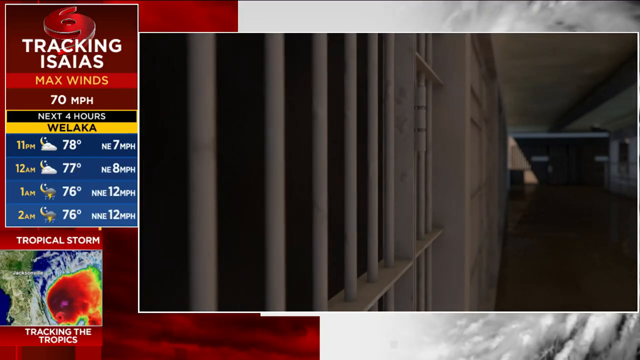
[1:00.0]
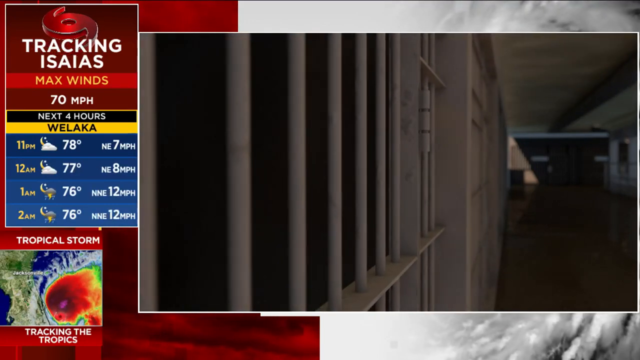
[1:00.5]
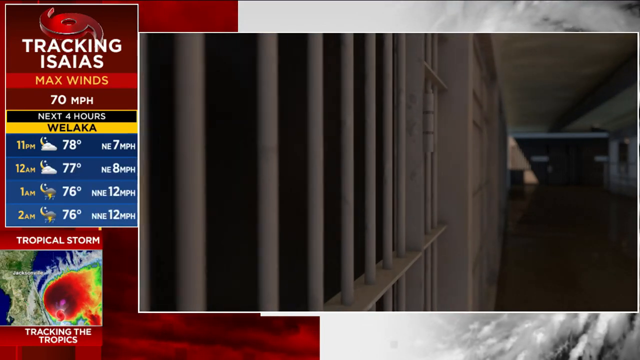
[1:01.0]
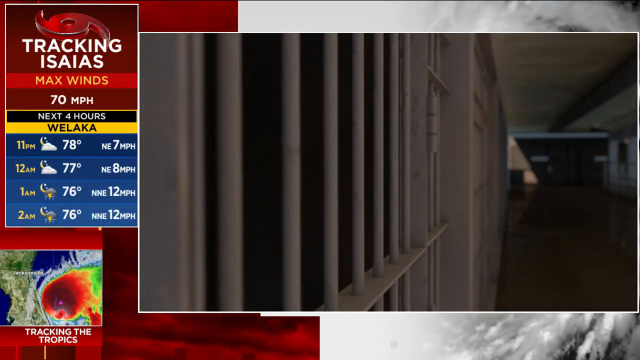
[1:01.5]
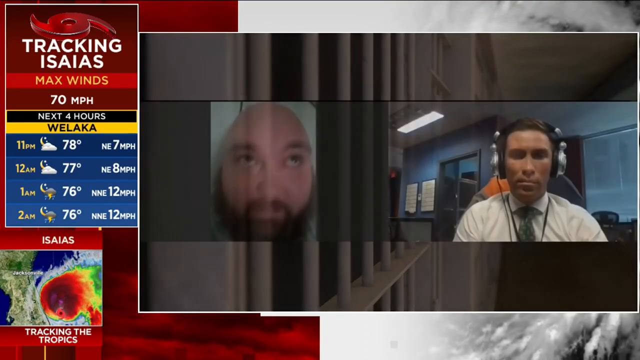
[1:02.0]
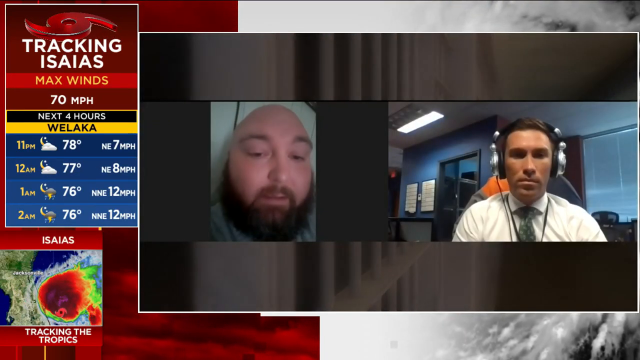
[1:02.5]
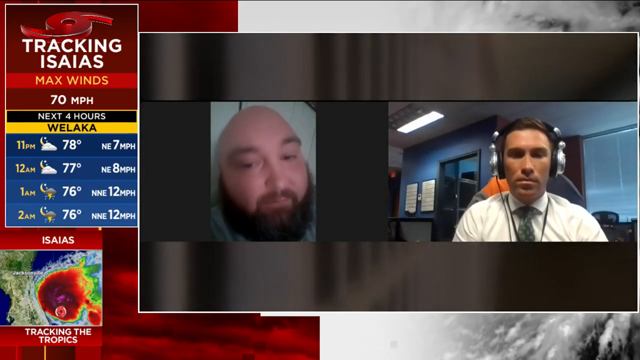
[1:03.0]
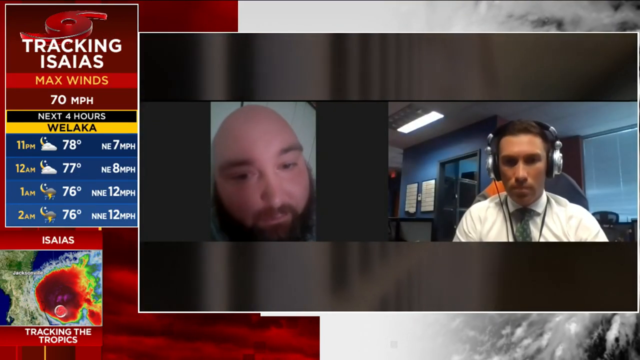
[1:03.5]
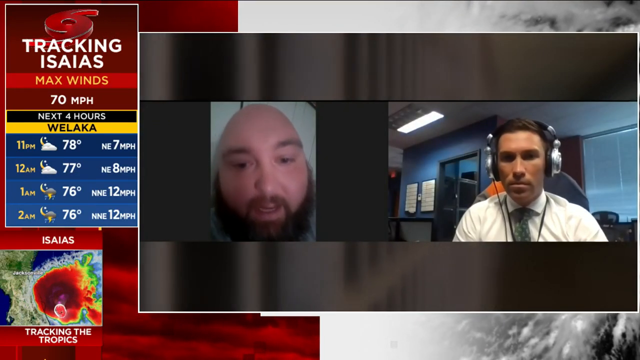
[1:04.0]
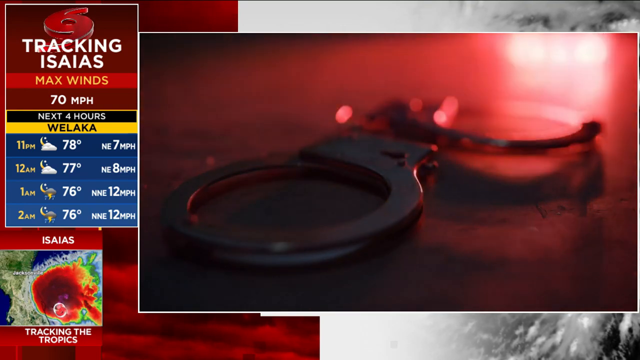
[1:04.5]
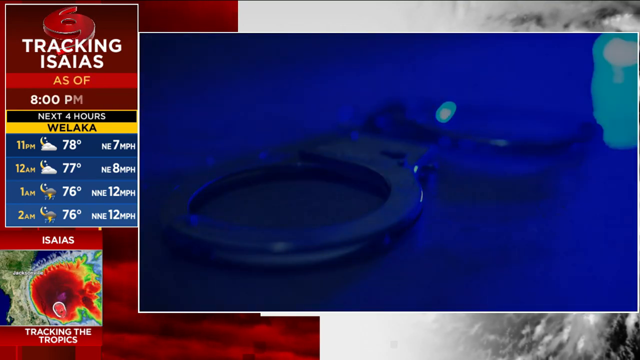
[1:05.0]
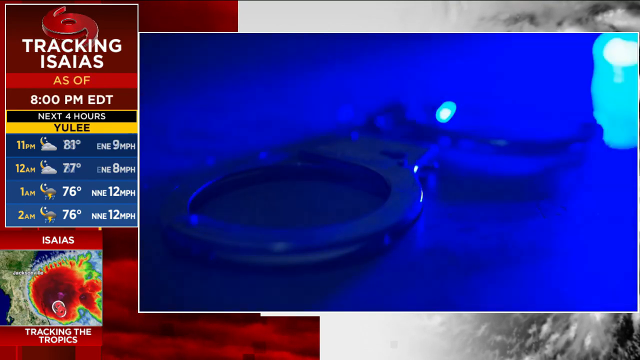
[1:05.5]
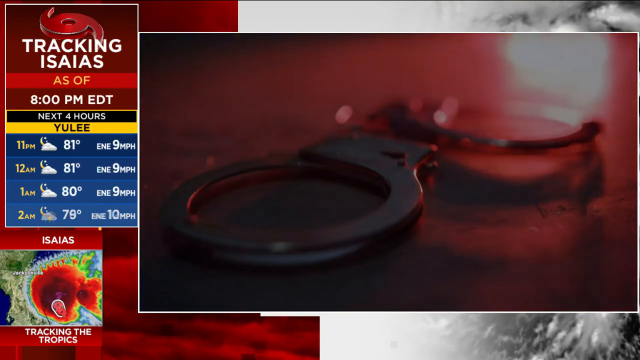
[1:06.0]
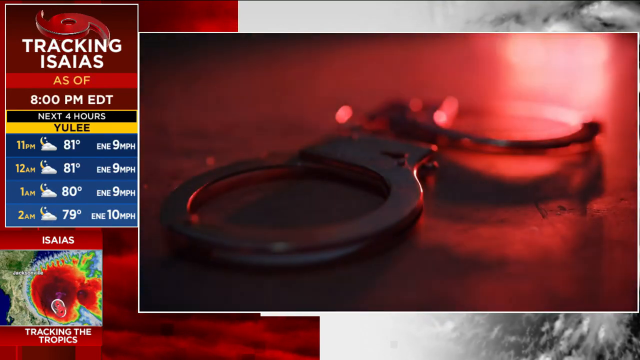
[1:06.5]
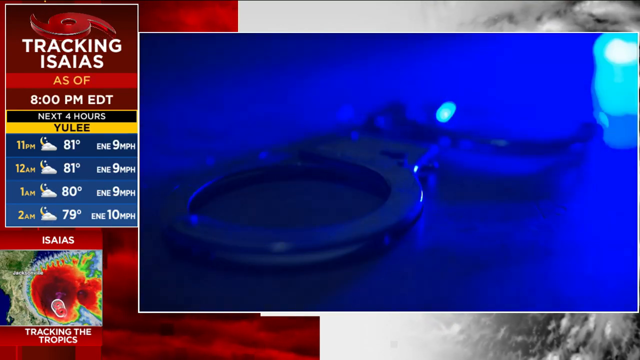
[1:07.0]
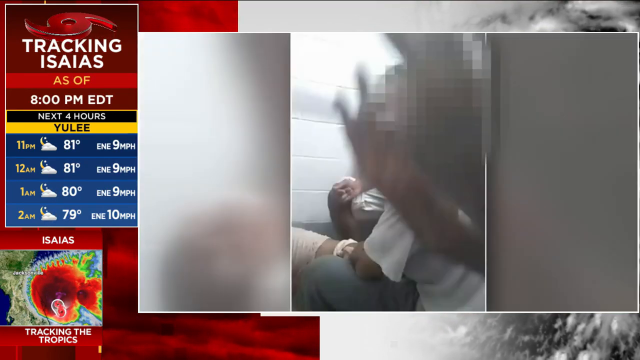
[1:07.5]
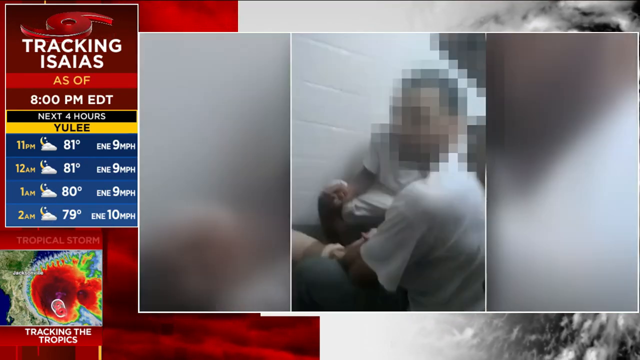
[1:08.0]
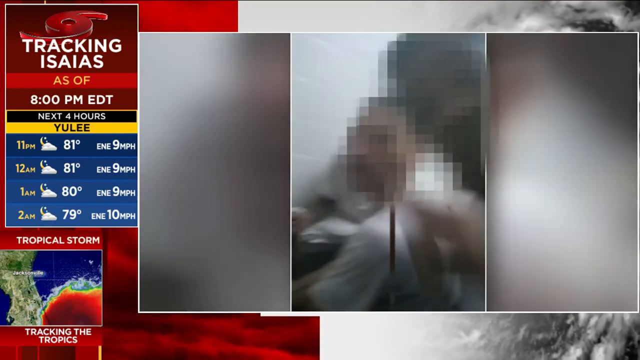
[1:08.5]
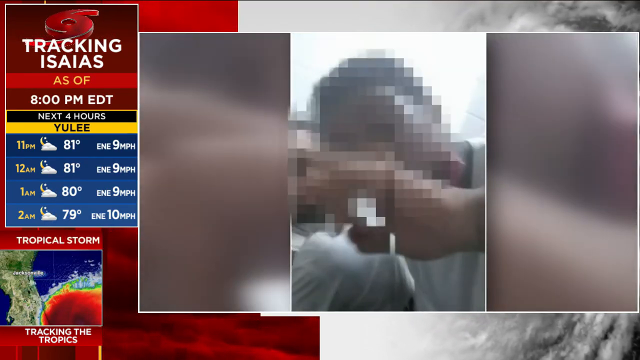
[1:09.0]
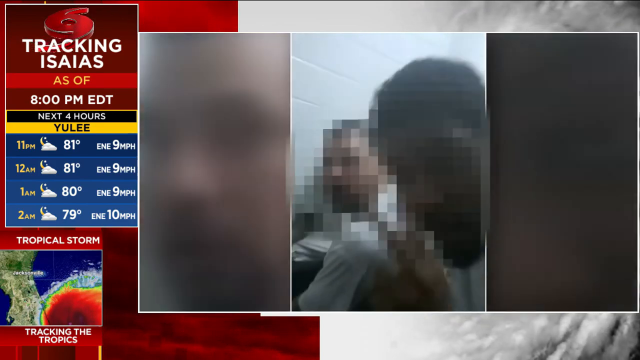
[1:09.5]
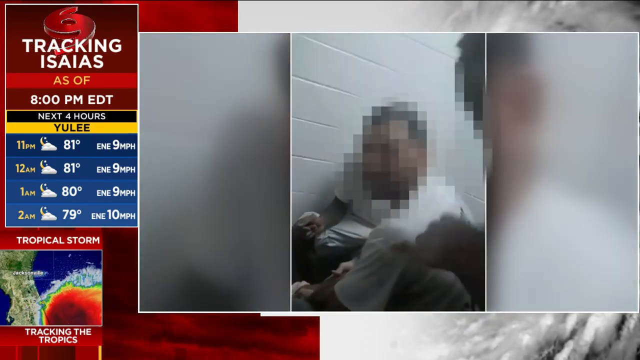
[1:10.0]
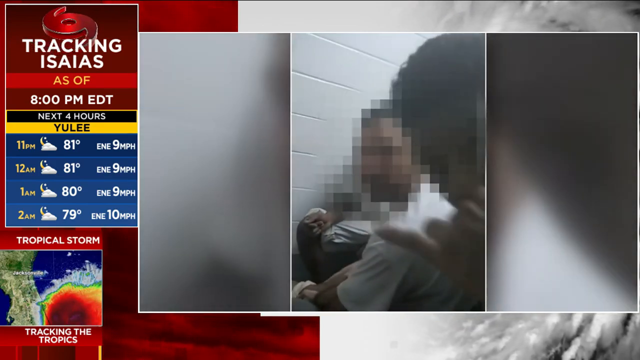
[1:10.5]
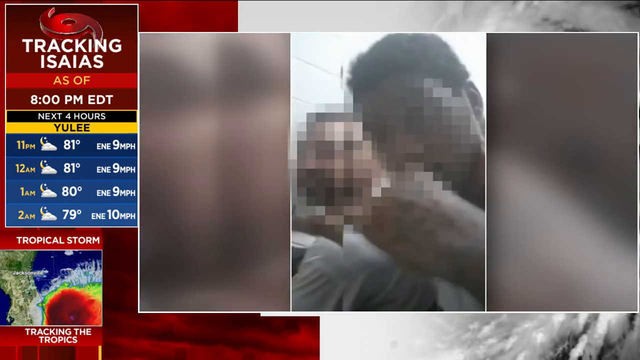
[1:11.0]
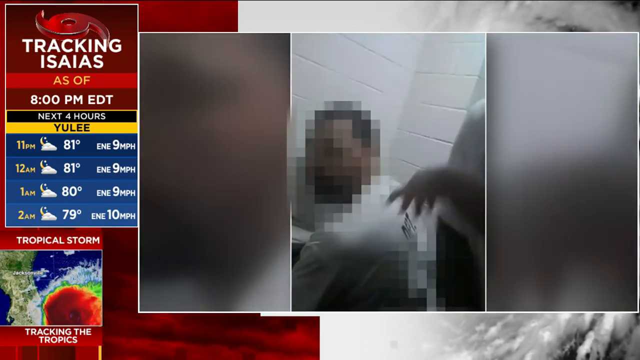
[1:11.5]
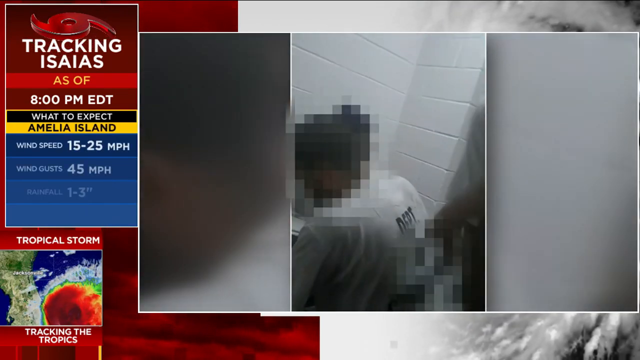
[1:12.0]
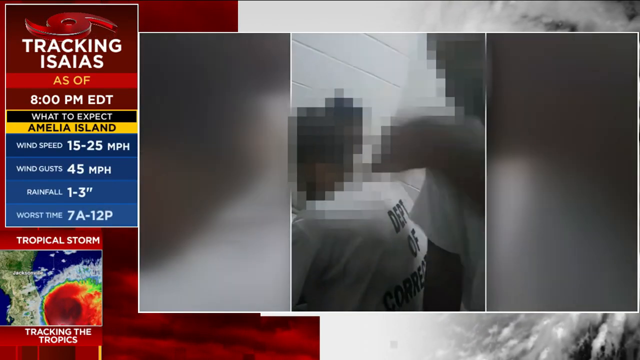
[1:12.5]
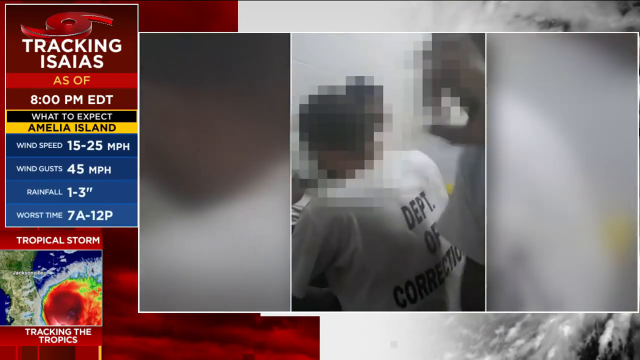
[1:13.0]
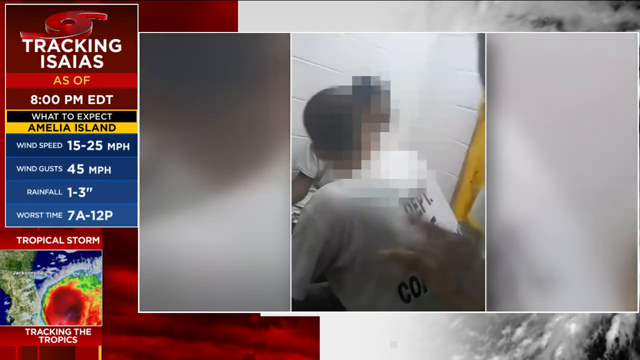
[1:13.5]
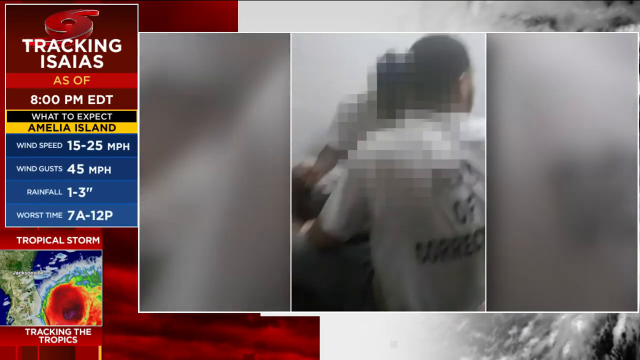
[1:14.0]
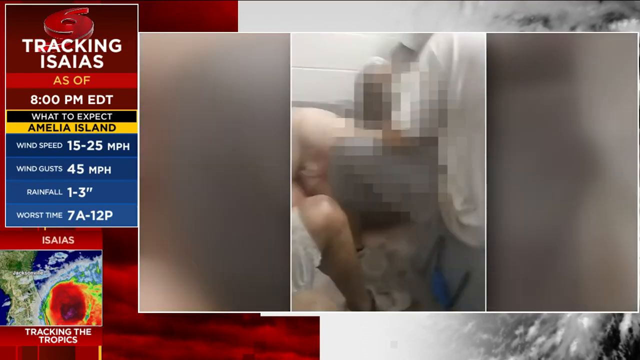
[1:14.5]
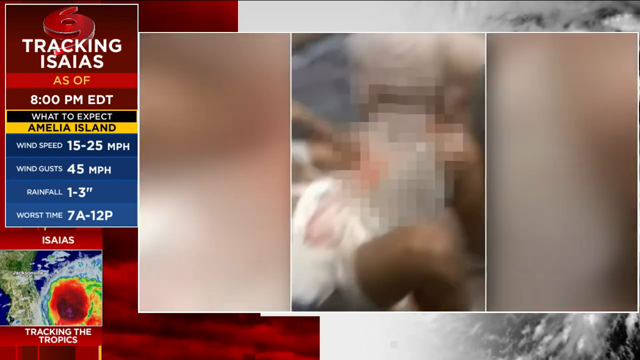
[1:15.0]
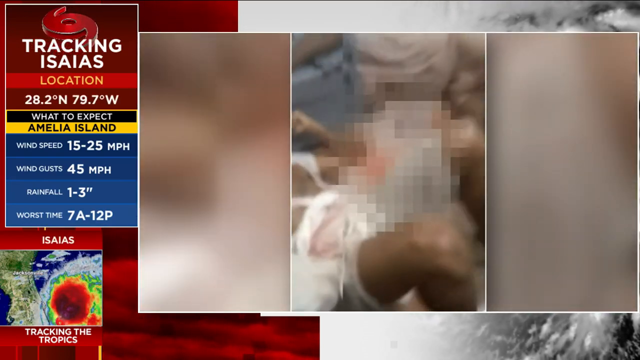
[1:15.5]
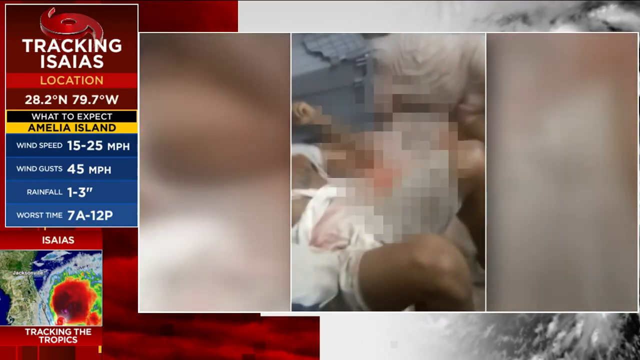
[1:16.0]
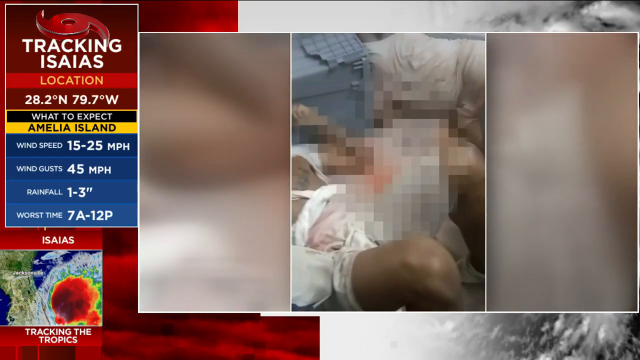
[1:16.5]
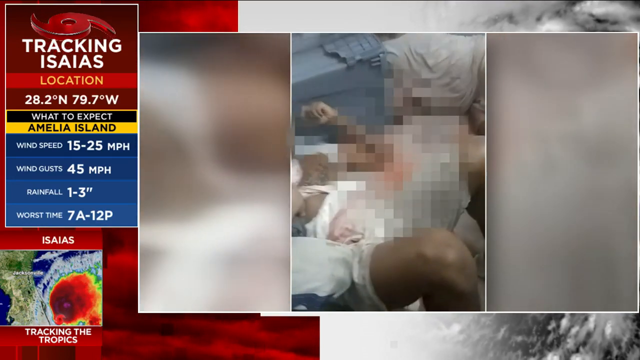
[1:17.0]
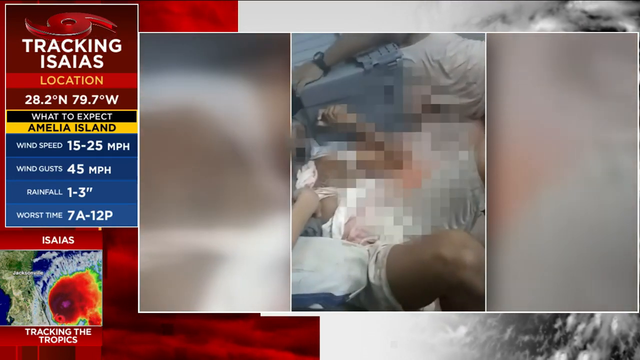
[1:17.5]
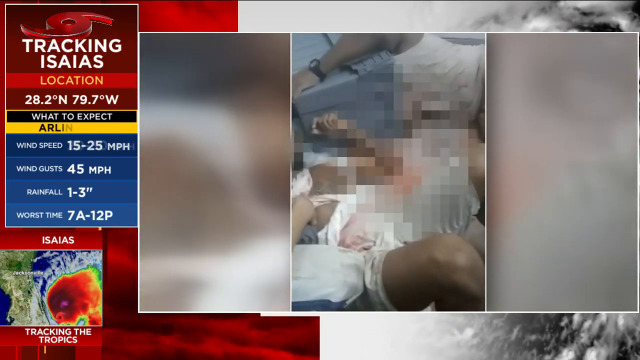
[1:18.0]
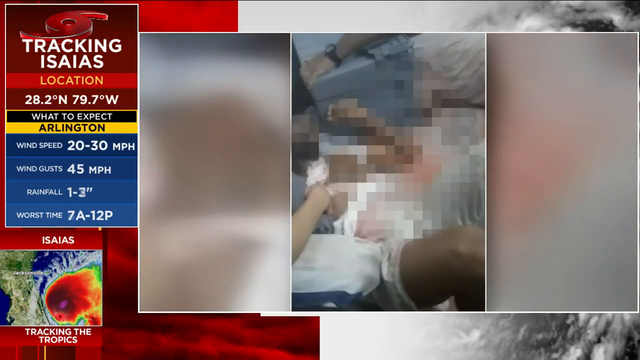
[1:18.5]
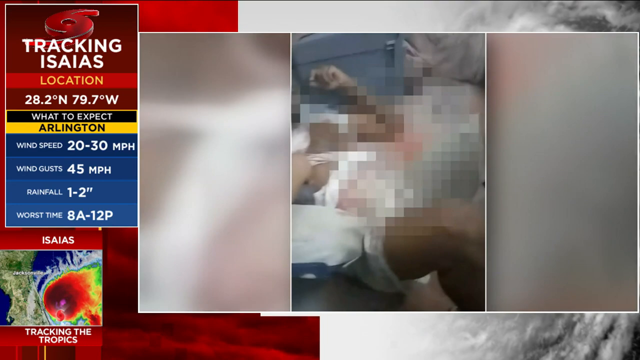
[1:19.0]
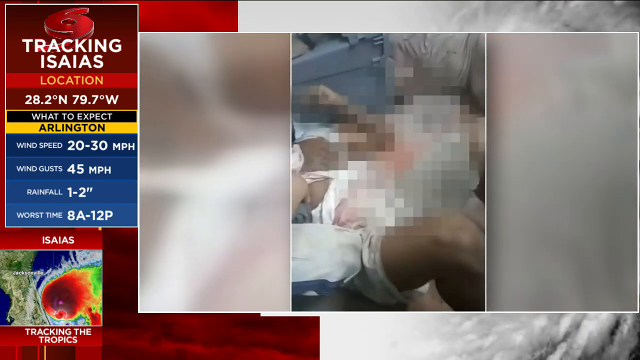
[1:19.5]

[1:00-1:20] Bars of what looks like a prison cell appear first, dirty and rusty. Further back is what looks like a dark room where little can be seen; a bit of white shows through, and a small light appears to come through either a window or a room. The view slowly moves past the bars. Two people appear in the middle of the screen: a light-skinned man with a beard who nods his head, and a man talking who looks like the newsman, probably 30 to 35, wearing headphones. Handcuffs are shown with blue lighting and a darker shadow around the cuff part, with blue and red flashing lights on them. Then two men with blurred faces appear; one is closer to the screen with his hand moving, and the other looks at the screen with his head tilted slightly. Another man in the back, hard to see, is knelt down. The man moving his hand is now standing. Another man is lying with one hand close to his head, propped up, and his legs spread apart; he looks like he may be lying down or in pain. There is a lot of white on him, apparently his clothes. The footage is very blurry because of the blurring. It returns to the bars and then to the two people talking, with the man moving his head back and forth.